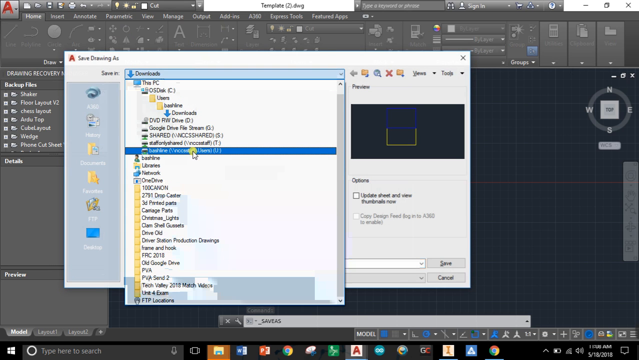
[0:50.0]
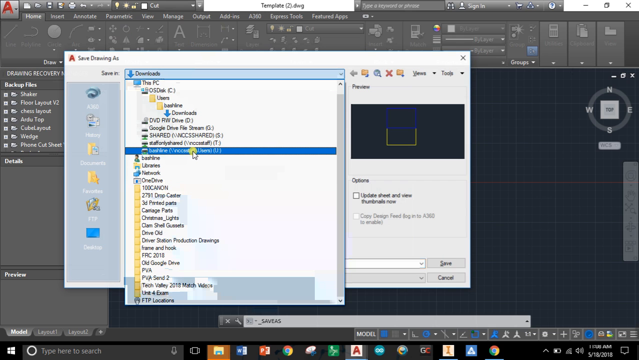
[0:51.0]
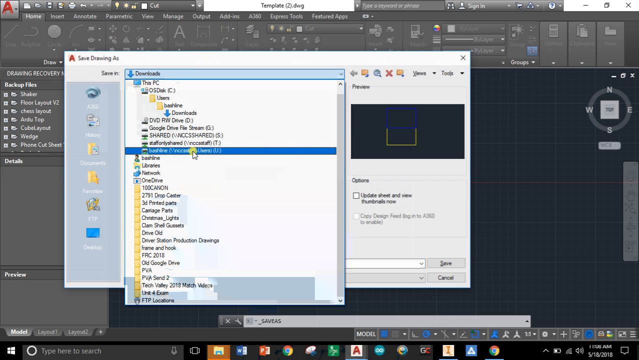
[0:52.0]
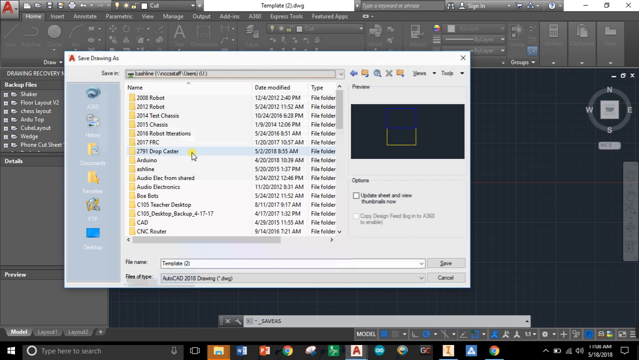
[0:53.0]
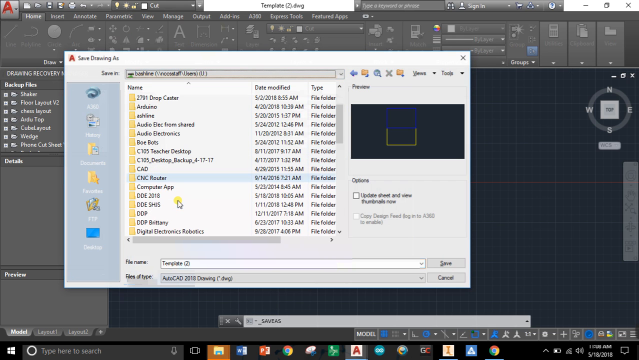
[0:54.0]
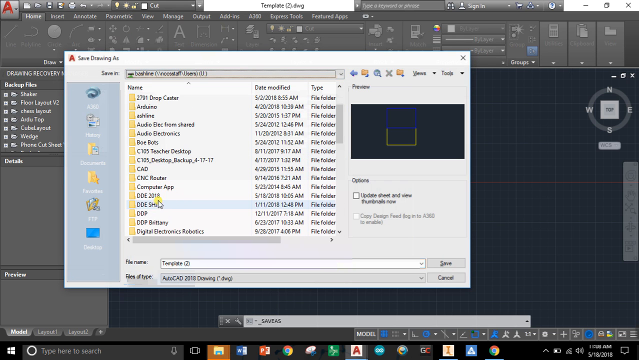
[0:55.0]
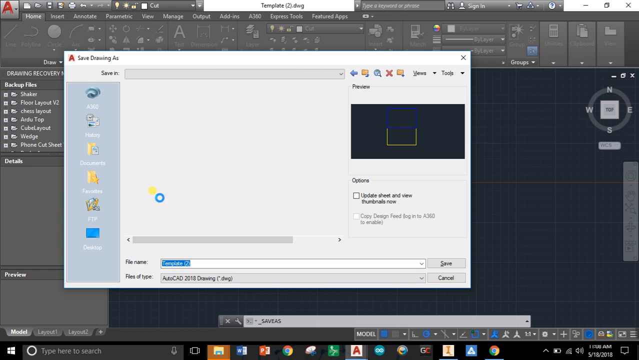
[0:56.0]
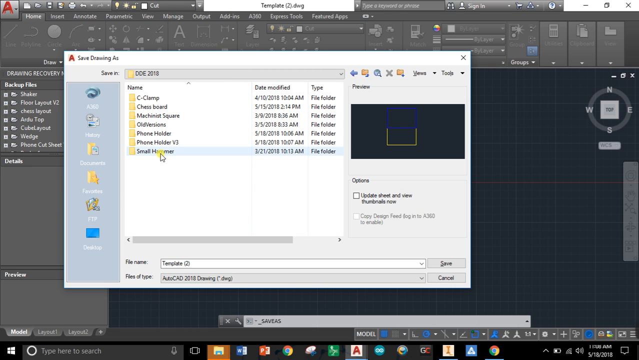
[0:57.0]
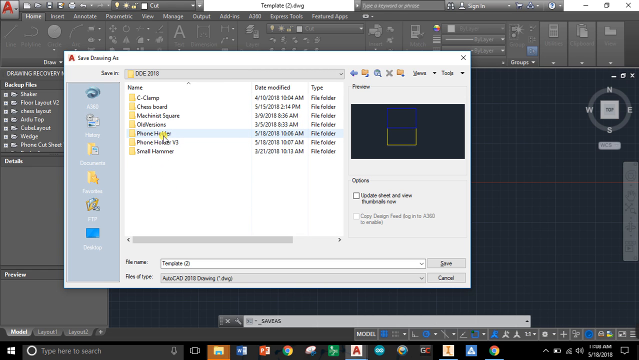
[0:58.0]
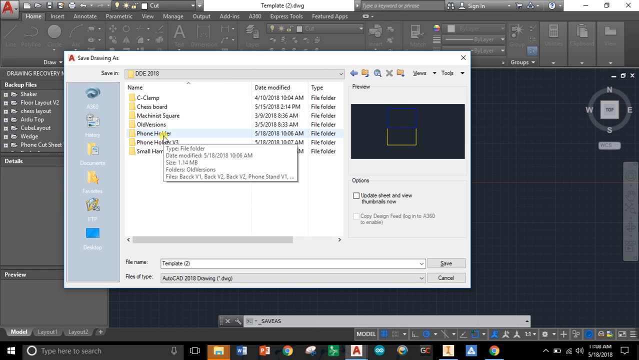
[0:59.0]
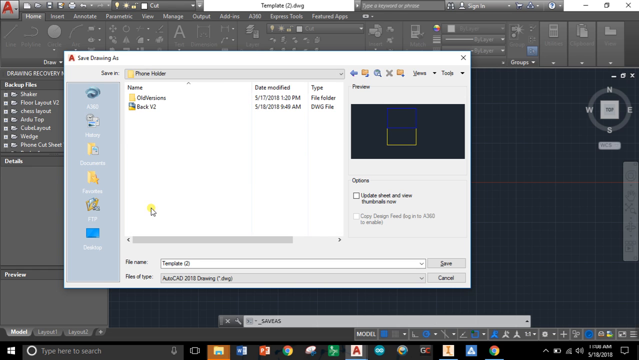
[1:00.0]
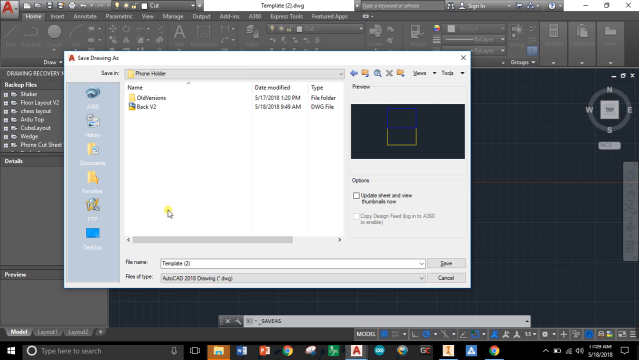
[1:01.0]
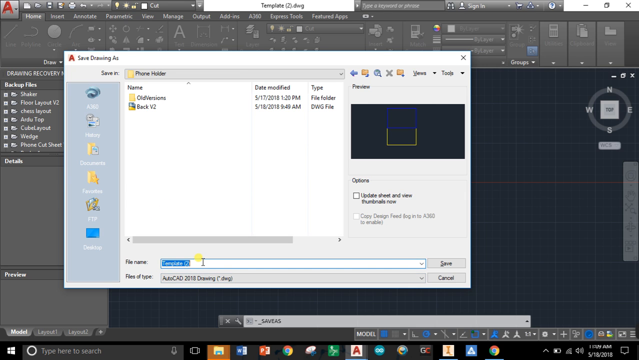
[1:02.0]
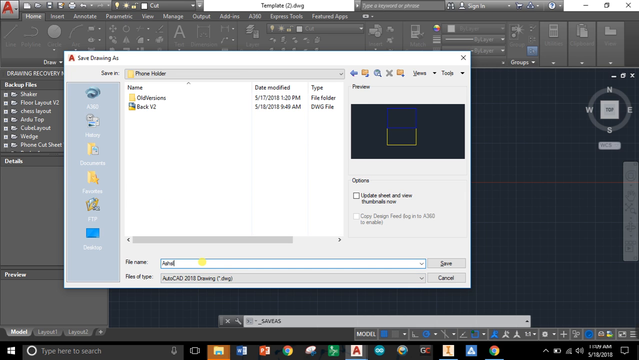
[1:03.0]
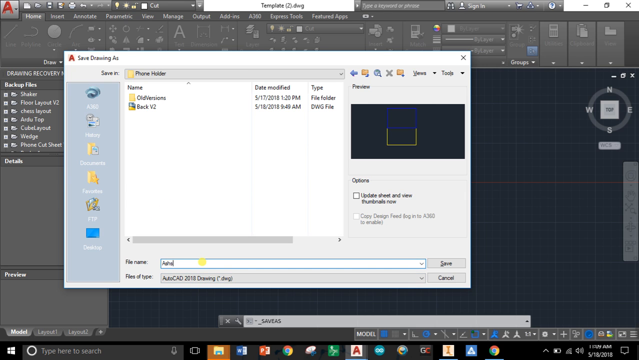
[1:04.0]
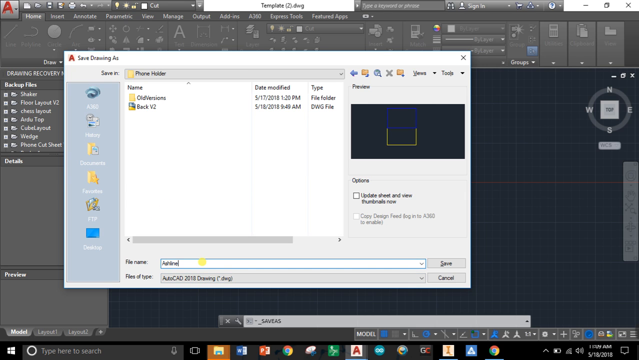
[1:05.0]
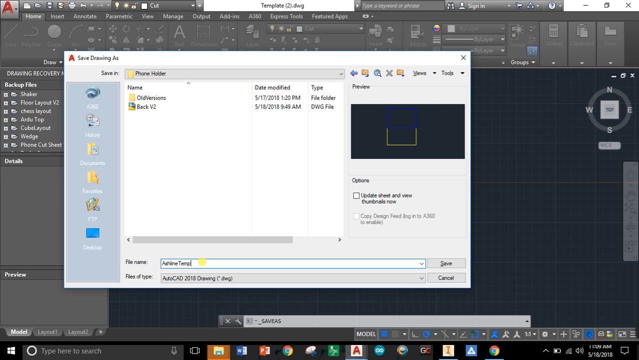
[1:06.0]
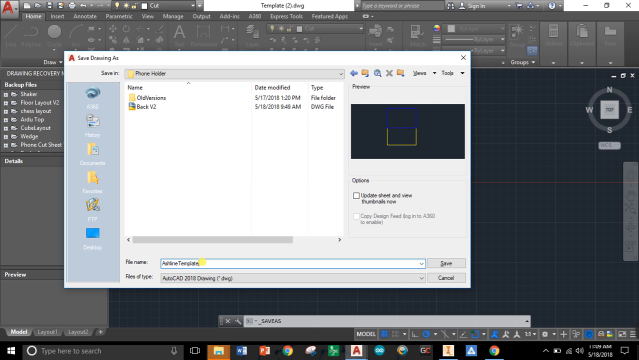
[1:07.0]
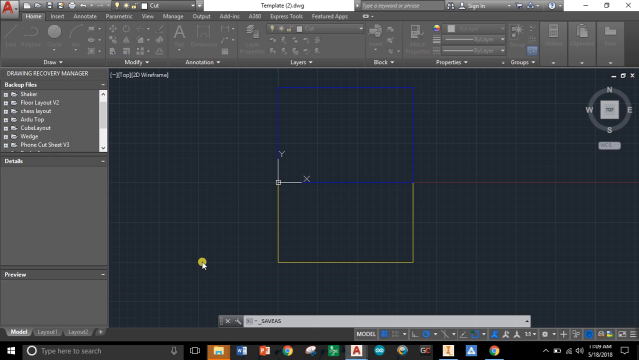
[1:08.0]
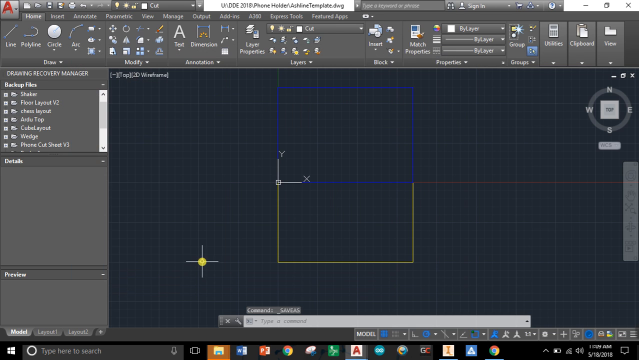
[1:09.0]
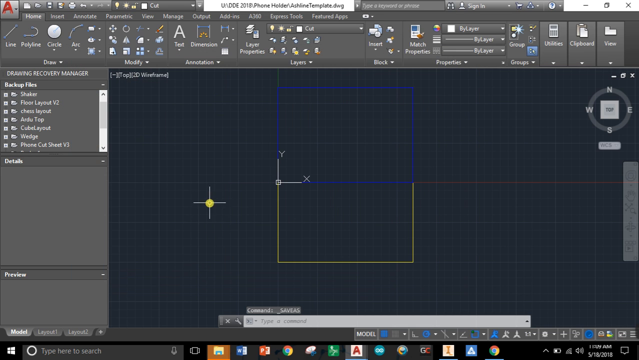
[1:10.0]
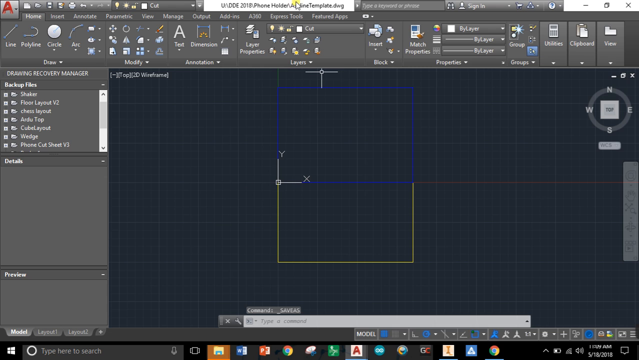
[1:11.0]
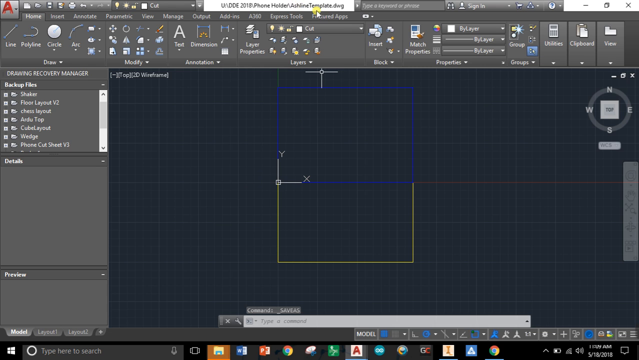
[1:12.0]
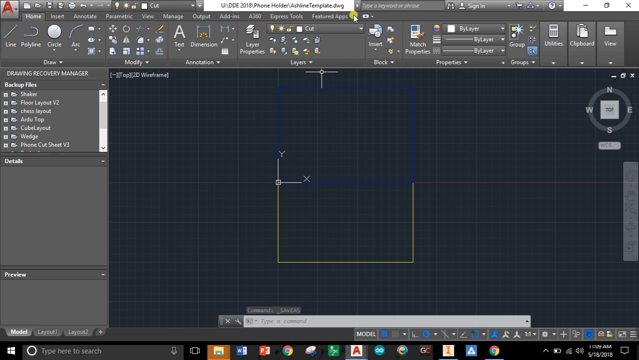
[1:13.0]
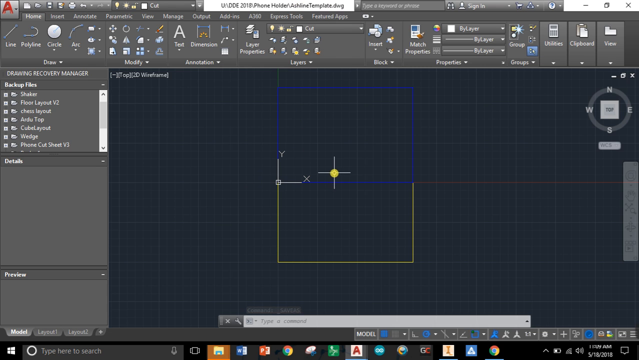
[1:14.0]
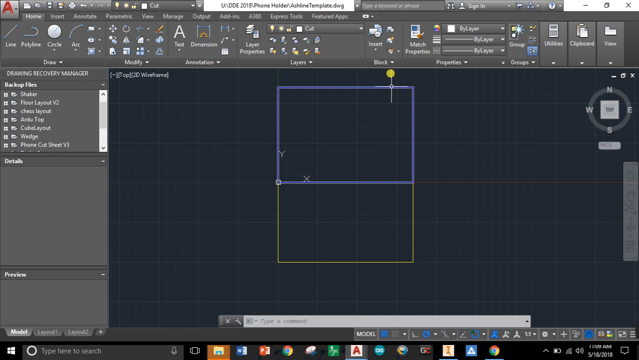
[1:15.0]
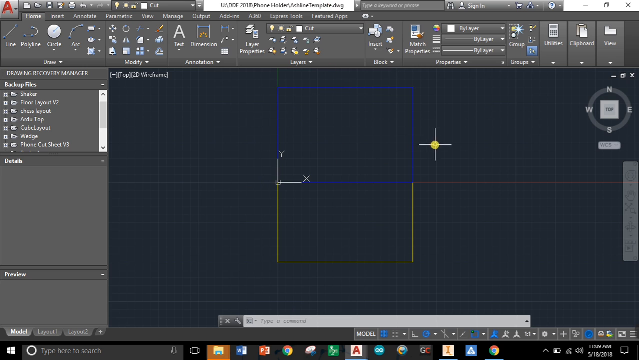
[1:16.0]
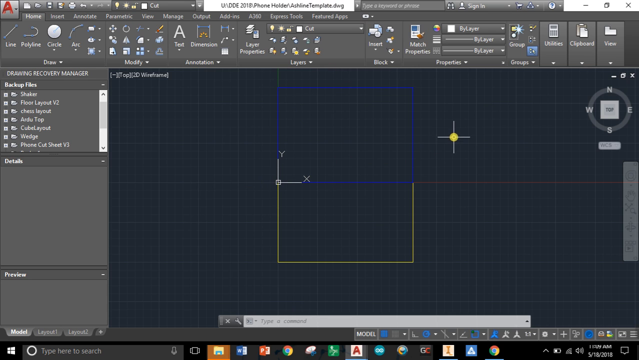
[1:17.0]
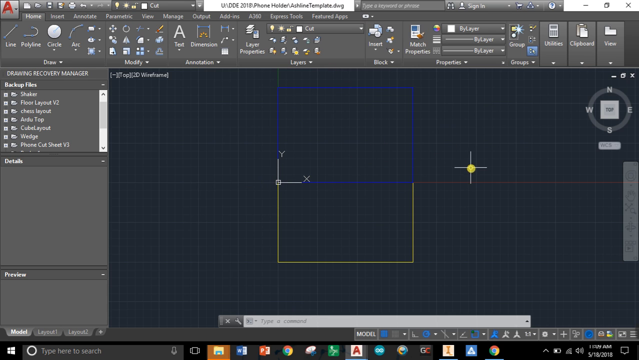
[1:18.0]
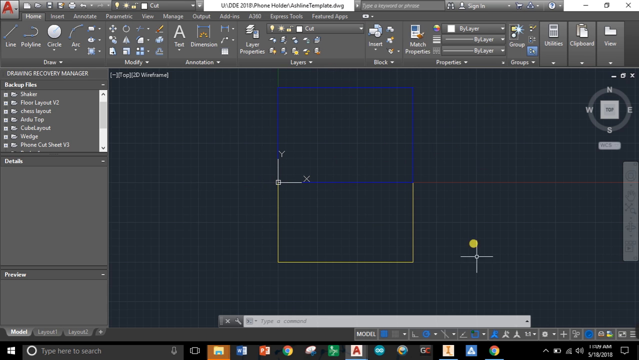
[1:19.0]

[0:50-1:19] Continuing down the folders, they are on their U drive, where they go into a DDE file, then into phone holder, and save the file as ashlinetemplate.dwg in .dwg format, showing how to name and save the template on an external drive using the save as feature in the AutoCAD software. Before the video ends, the cursor hovers around in the CAD software on a blue square, with a yellow square below it and an x and y axis in the center.